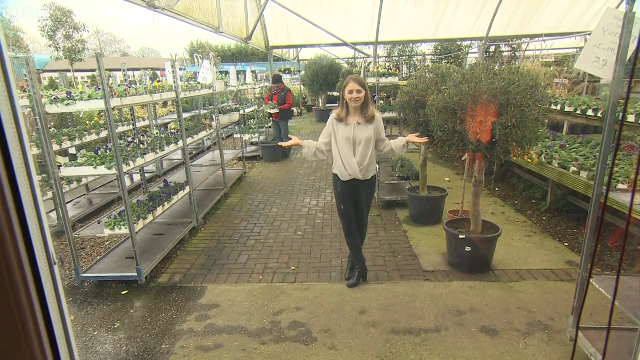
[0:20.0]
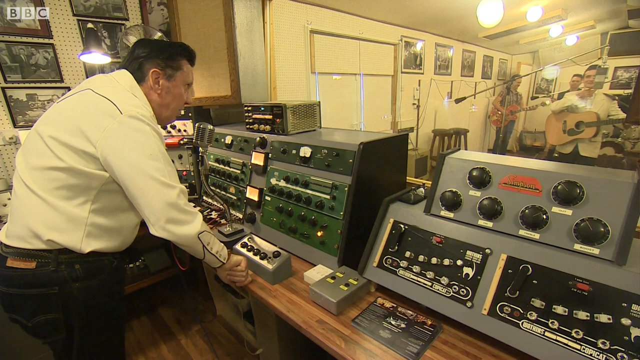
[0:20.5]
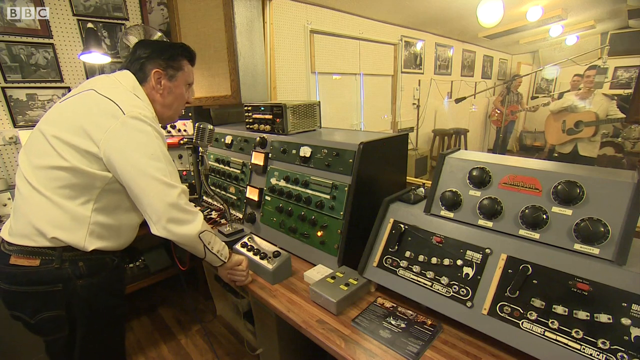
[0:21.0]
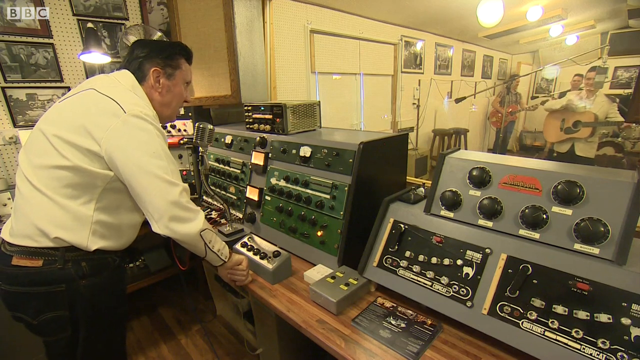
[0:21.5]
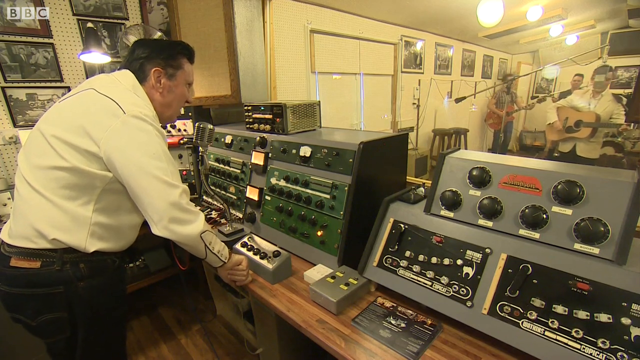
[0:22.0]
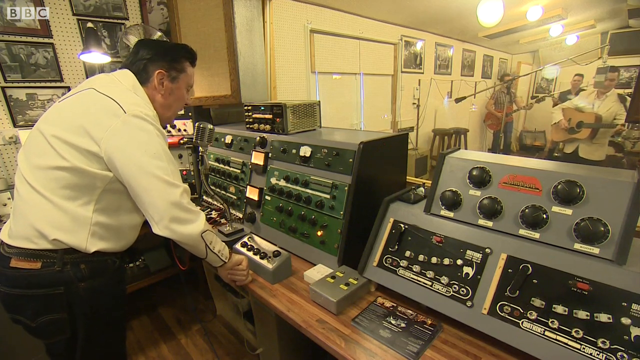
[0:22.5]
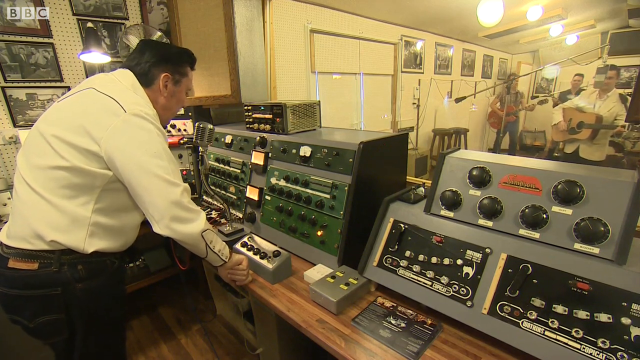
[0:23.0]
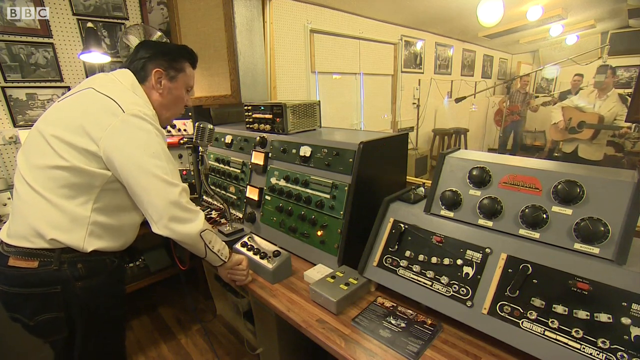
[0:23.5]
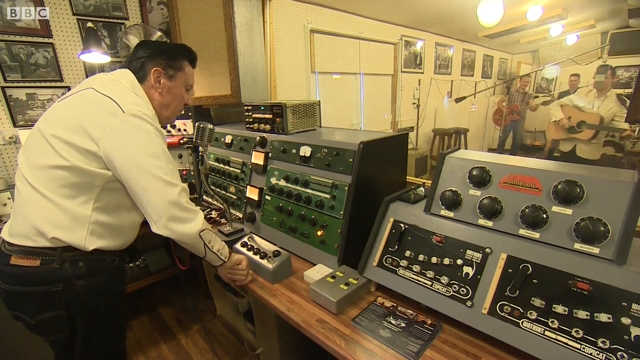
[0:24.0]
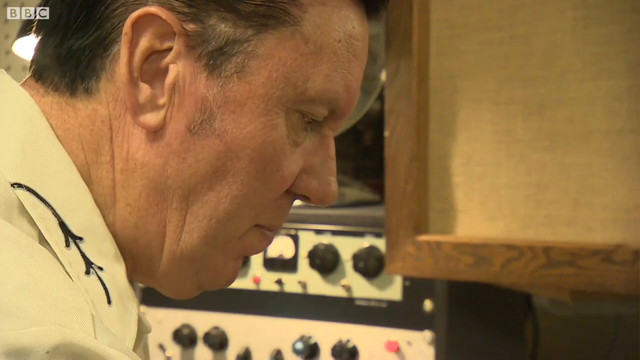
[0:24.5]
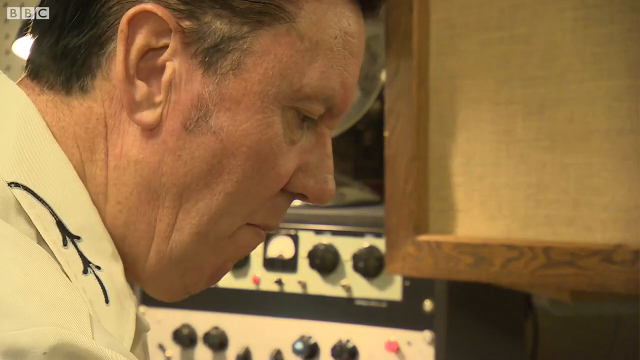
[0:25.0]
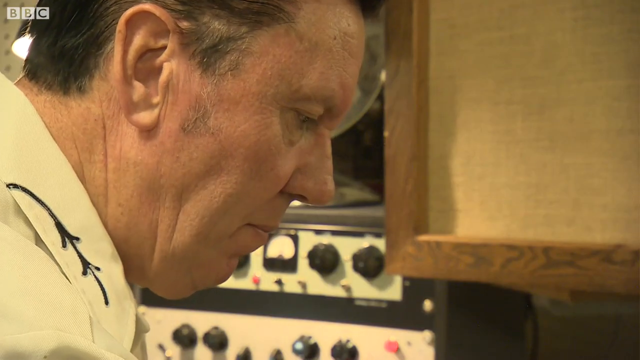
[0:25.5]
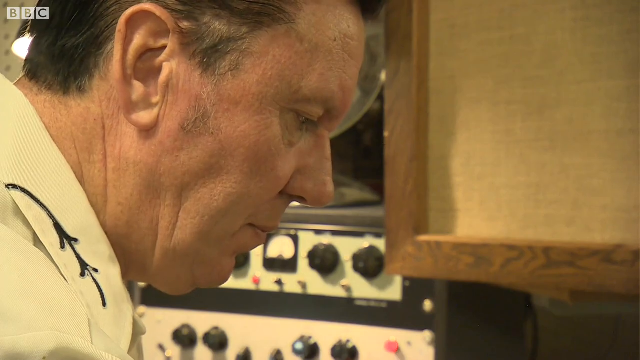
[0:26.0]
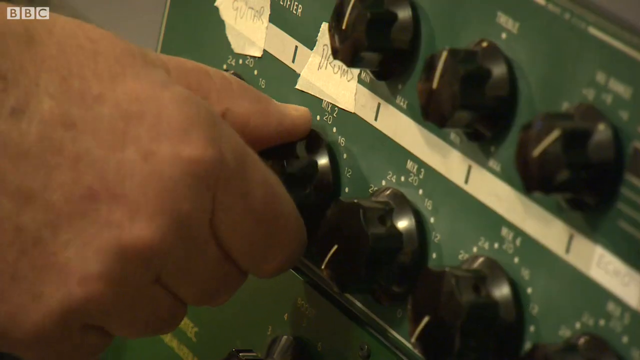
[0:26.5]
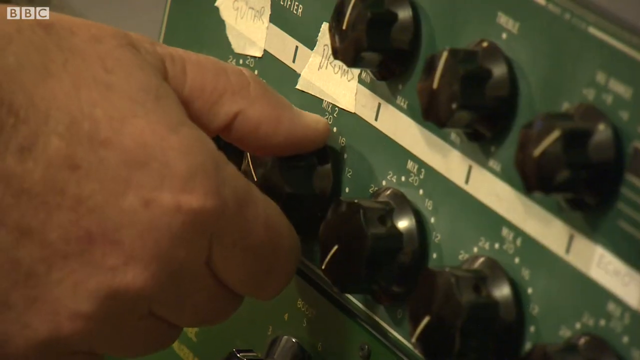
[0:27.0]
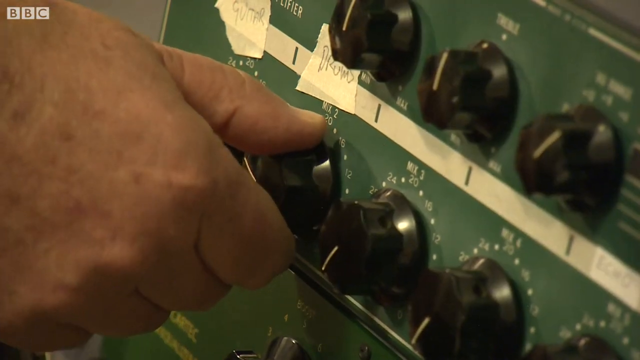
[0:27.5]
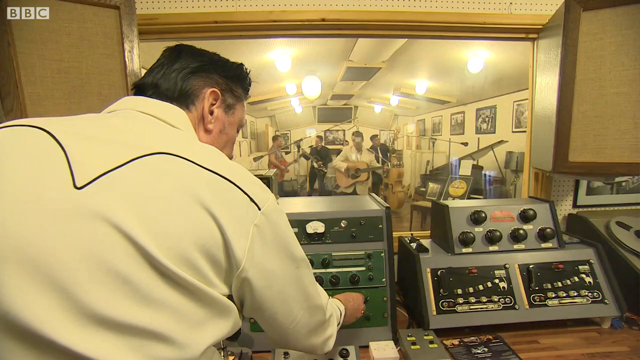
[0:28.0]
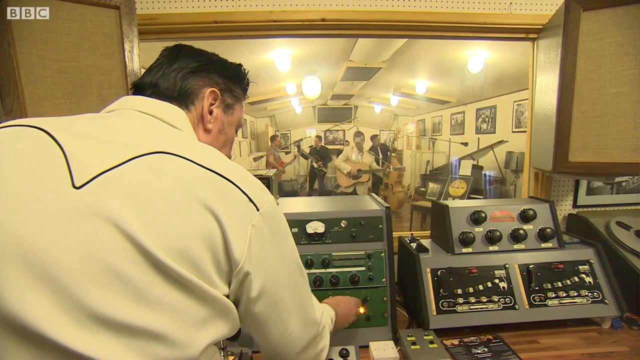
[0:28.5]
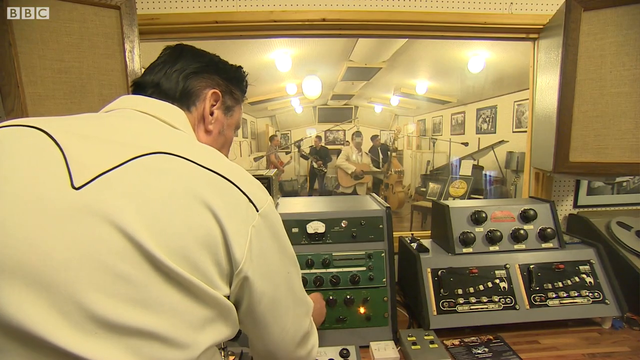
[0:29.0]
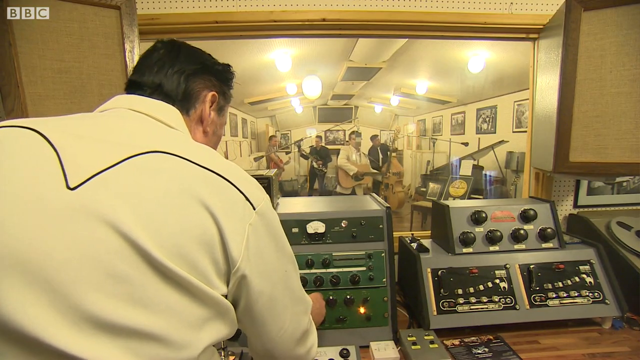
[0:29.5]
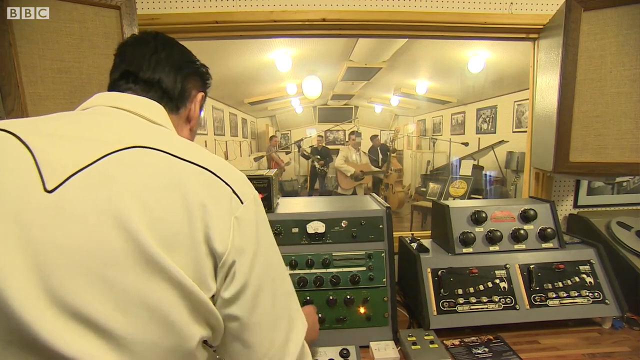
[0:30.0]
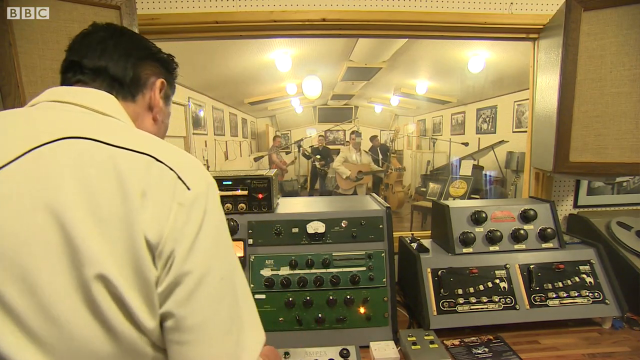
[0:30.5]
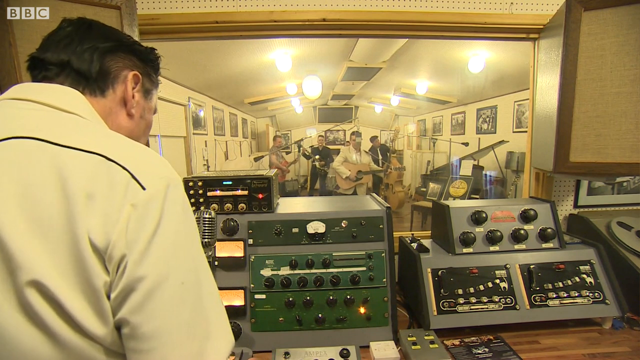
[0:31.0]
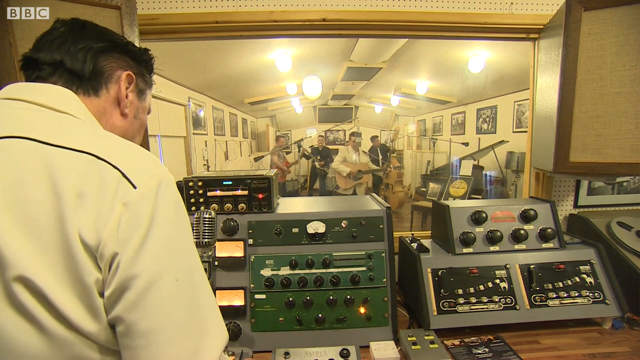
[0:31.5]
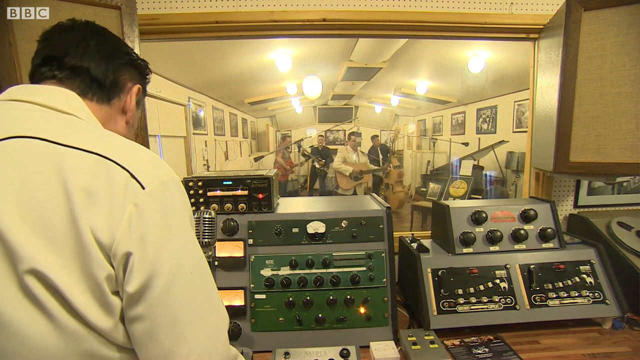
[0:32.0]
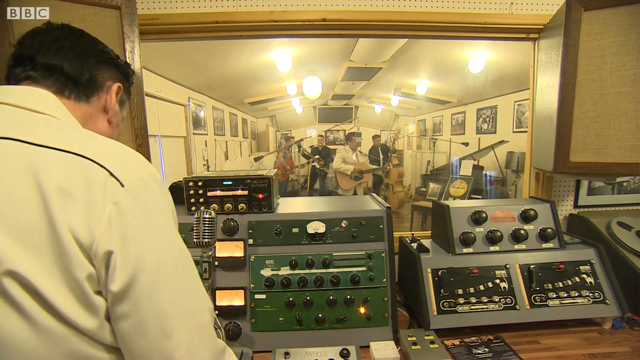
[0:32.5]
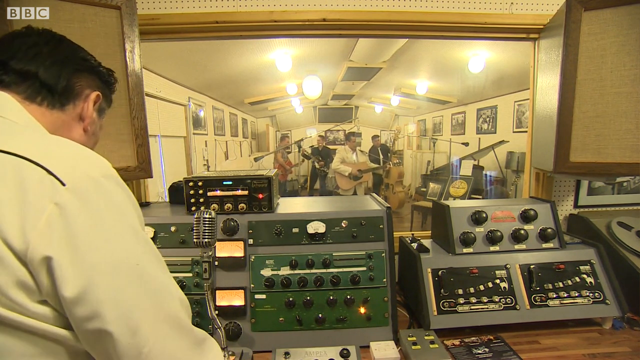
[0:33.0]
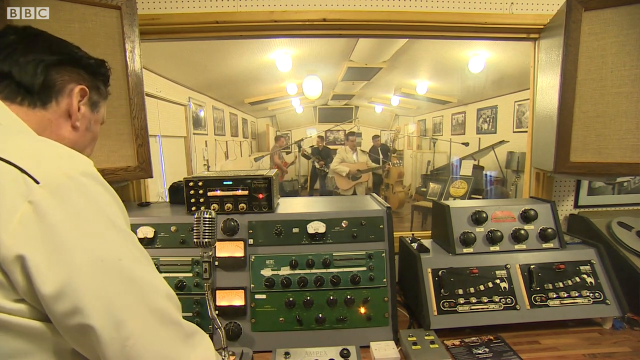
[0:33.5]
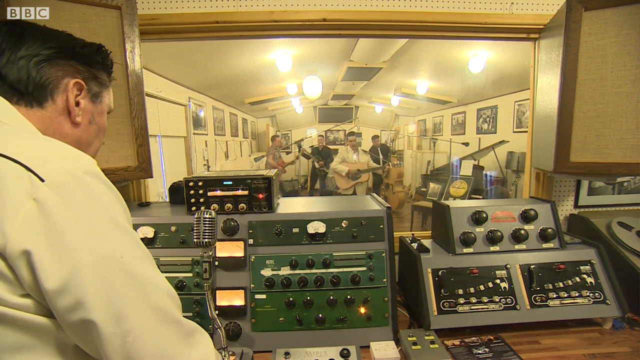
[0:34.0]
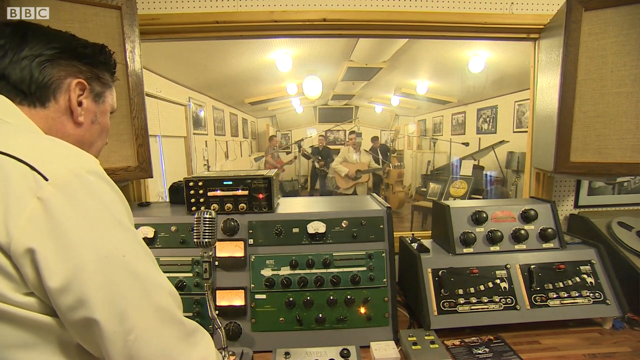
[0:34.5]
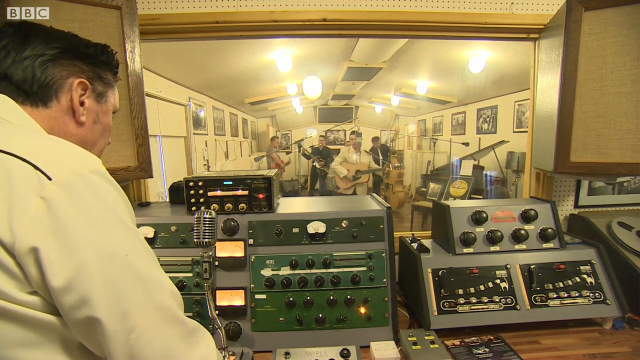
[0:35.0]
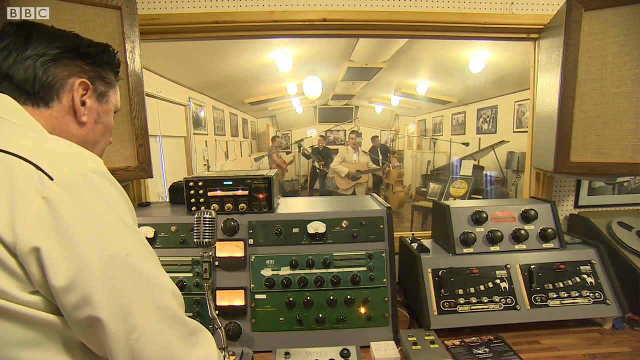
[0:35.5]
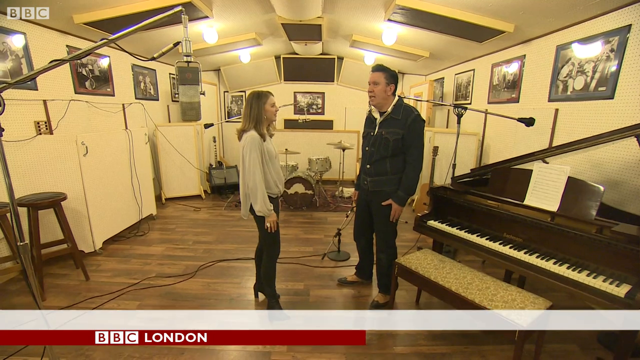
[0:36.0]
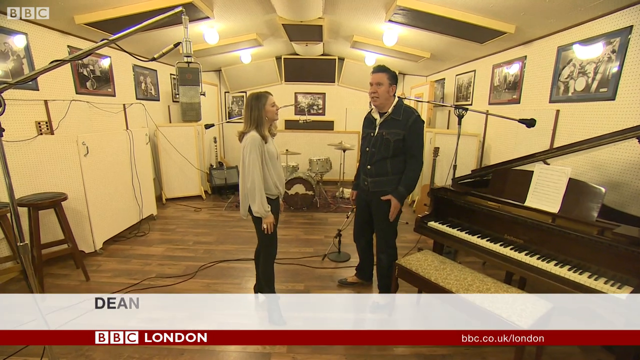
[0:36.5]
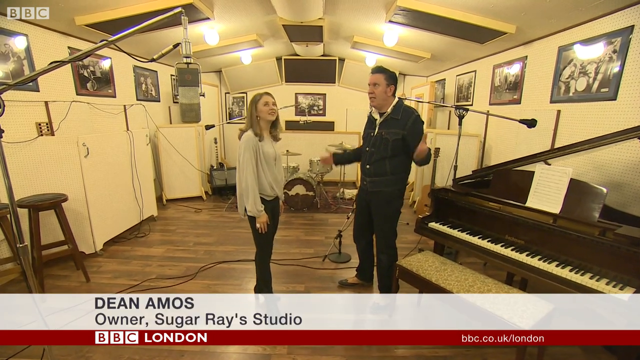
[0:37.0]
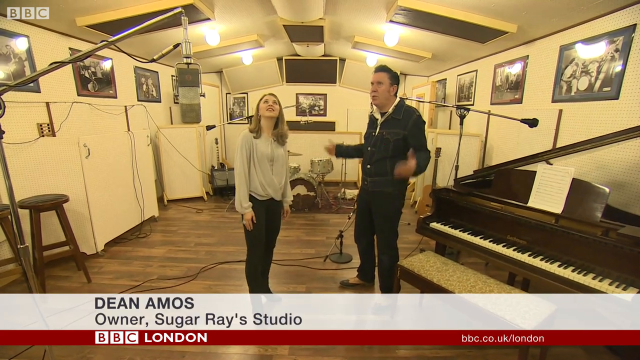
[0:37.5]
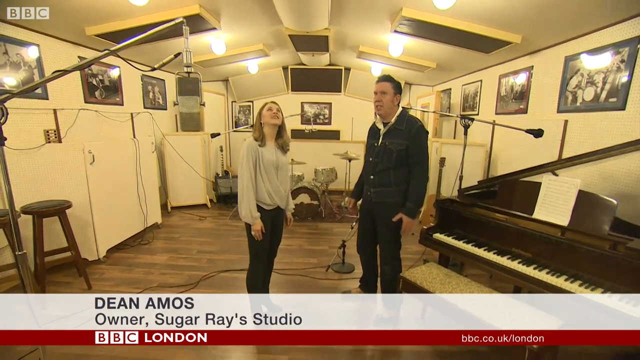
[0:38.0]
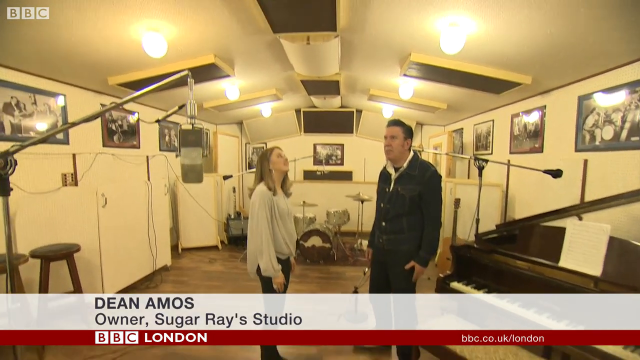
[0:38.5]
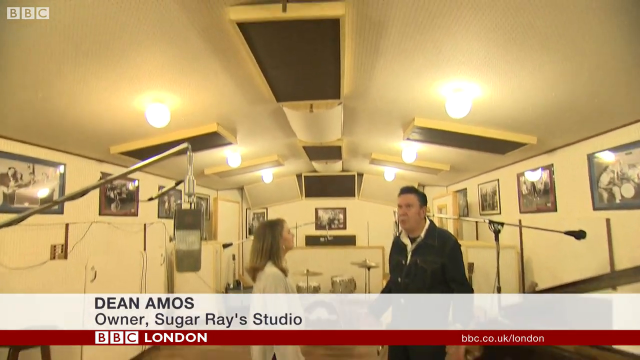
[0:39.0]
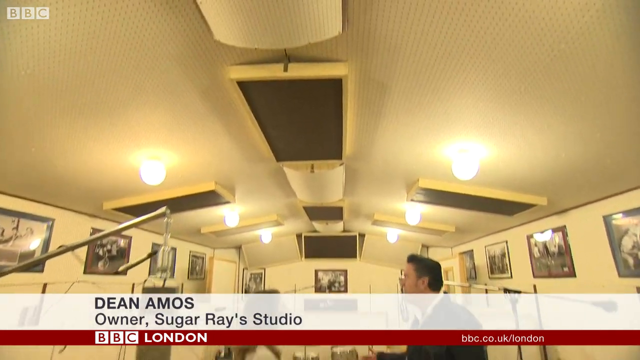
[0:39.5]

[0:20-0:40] A woman stands in a plant nursery, holding each hand out from her body expressively, as if using her hands to help express what she is saying. The video transitions to the inside of a music studio, where a band plays in a room behind a window, and a man on the other side of the window uses electronic equipment as if recording the band. The woman from the nursery is then shown standing inside the music studio, talking to the man who was recording. The room contains a piano, a drum kit in the back, a microphone hanging down on the left side, and other music equipment, with pictures and other things on the walls. The video then shows the ceiling, which apparently has noise-dampening material installed.